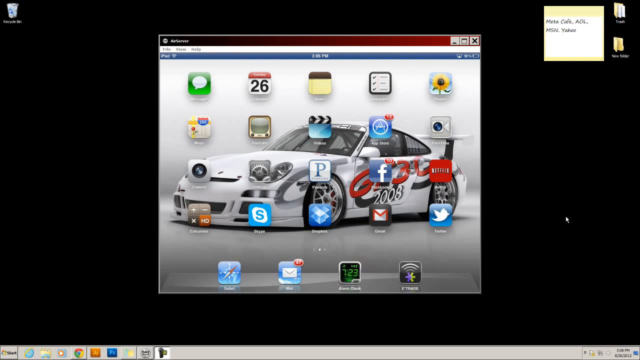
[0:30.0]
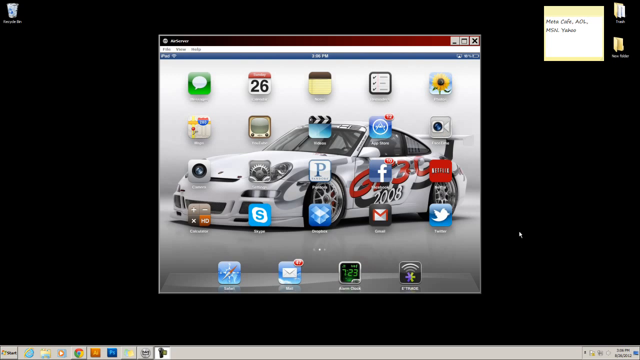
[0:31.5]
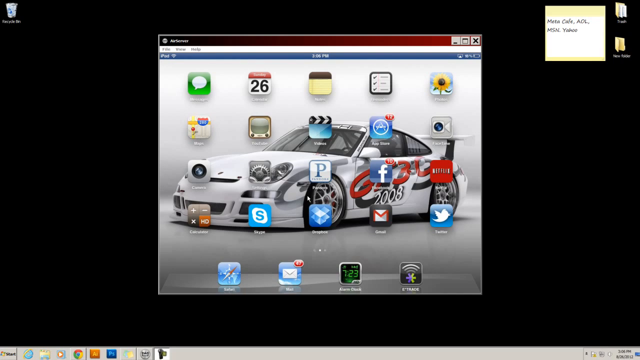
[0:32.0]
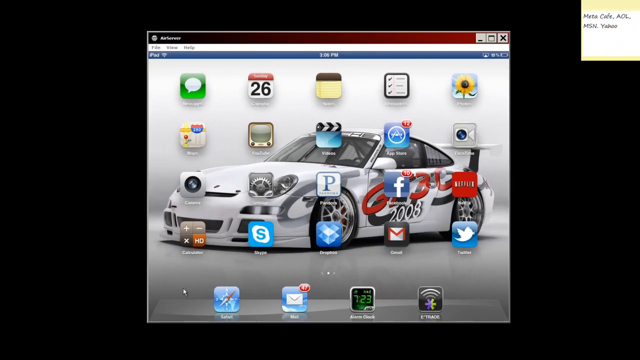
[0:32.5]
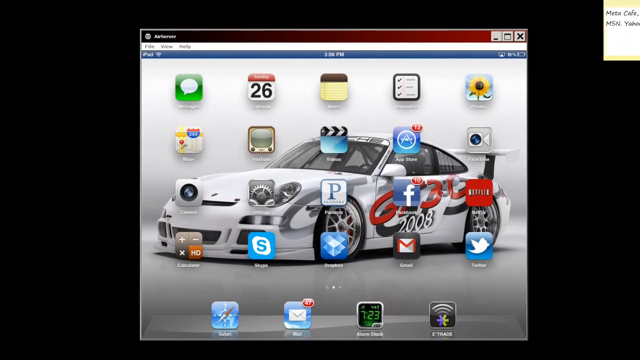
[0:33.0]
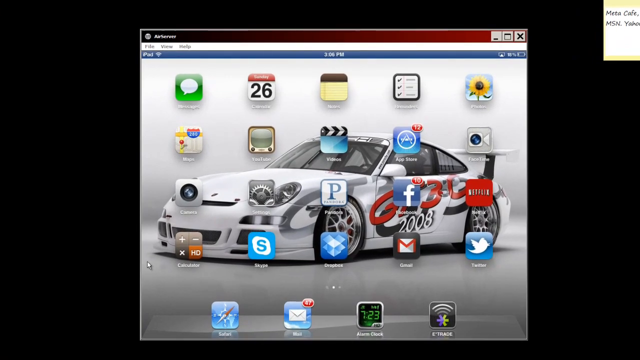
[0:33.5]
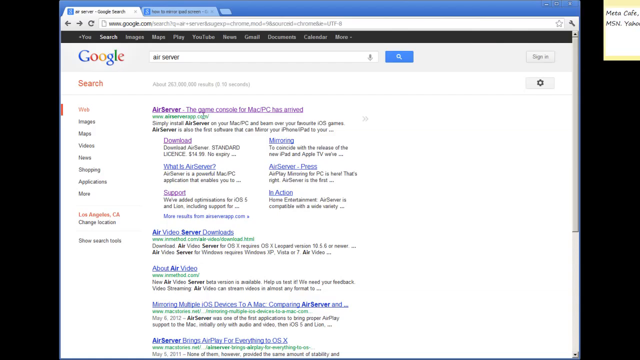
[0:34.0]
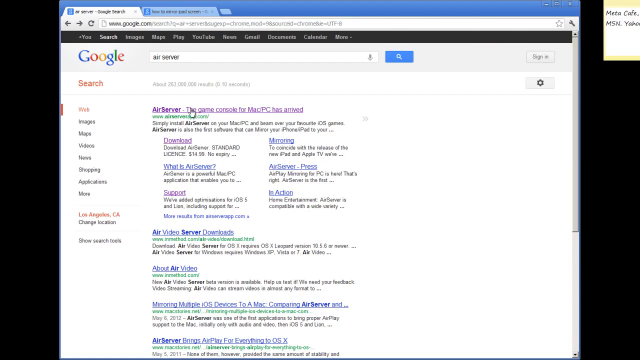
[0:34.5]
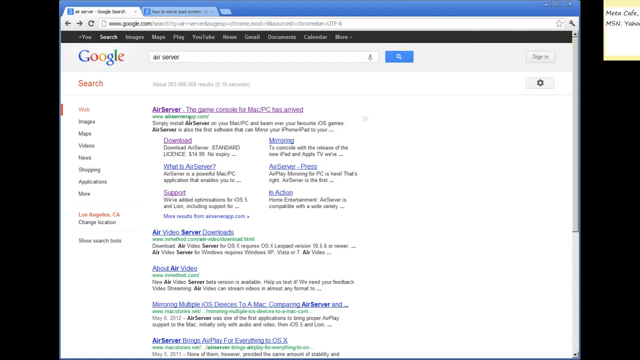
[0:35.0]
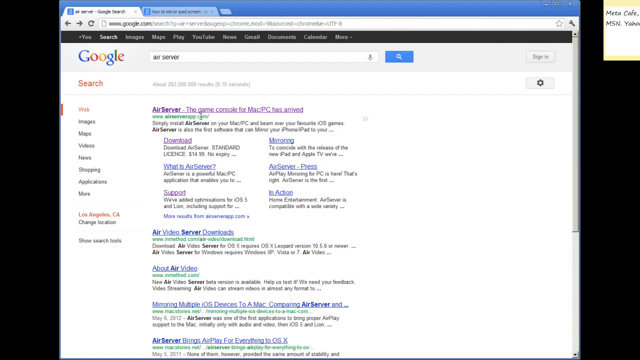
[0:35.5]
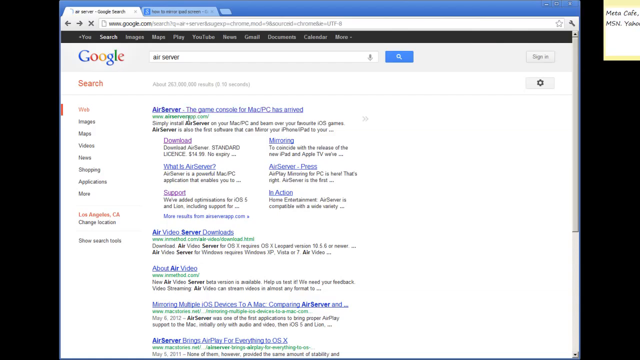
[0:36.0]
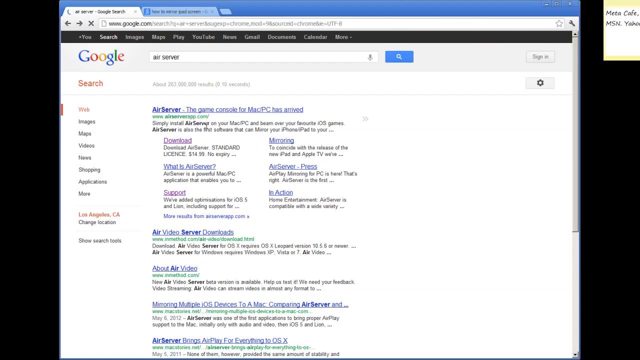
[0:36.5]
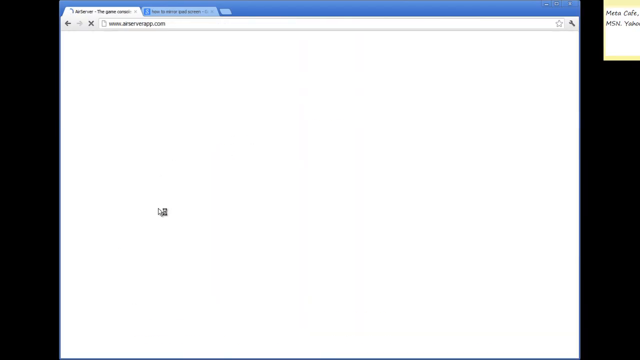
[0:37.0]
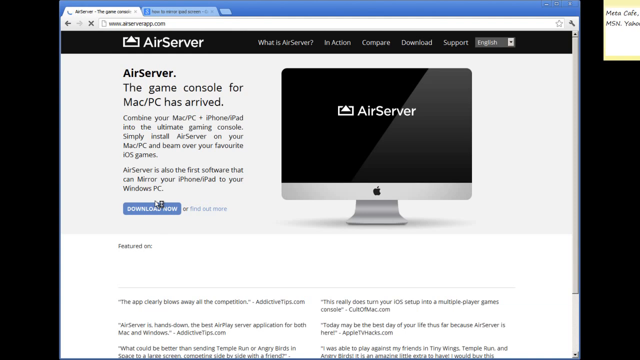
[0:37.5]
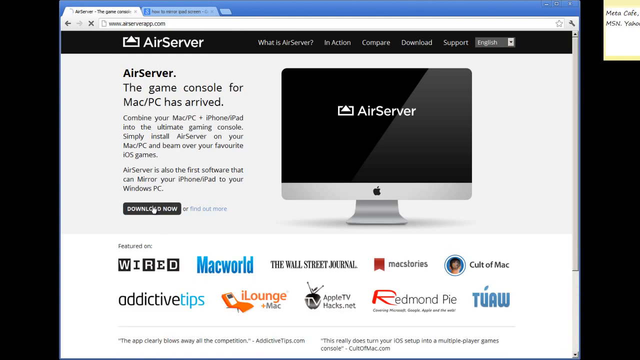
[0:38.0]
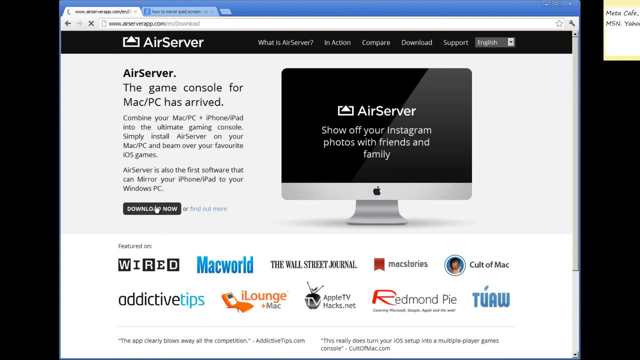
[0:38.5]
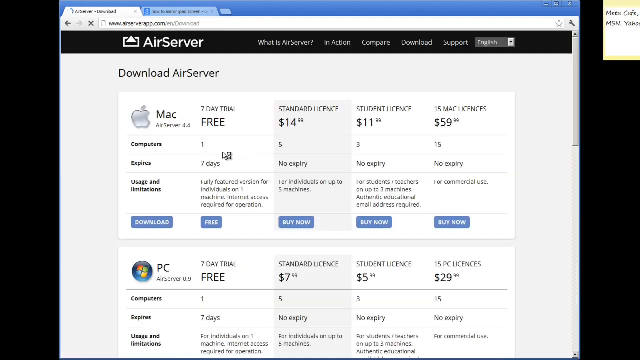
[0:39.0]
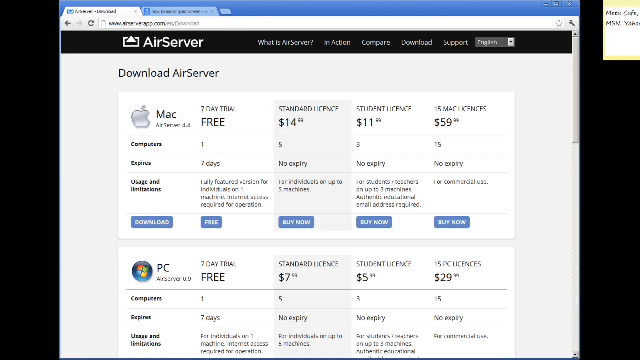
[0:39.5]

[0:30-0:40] The black desktop background shows the silver box in the middle of the screen, which appears to be an iPad screen, with all the apps on it and a white car, which looks like a racing super car, in the background. A post-it note is in the top right-hand corner, a taskbar is along the bottom of the screen and a recycle bin is in the top left corner. The user moves the mouse and the view zooms in on the middle of the screen, then transitions to a Google browser with "air server" in the search bar. The user clicks the first result, and a clean white website page loads with a Mac computer on the right-hand side and a black banner across the top with white text reading "air server". Black text on the white background below reads "air server the game console for mac/pc has arrived combine your mac/pc and iphone/ipad into the ultimate gaming console simply install air server on your mac/pc". The user clicks, and the page transitions to a purchase option screen.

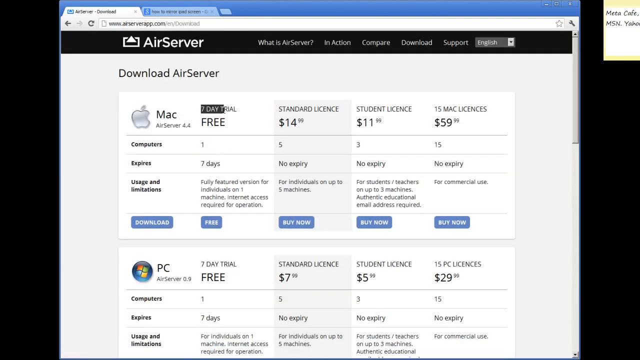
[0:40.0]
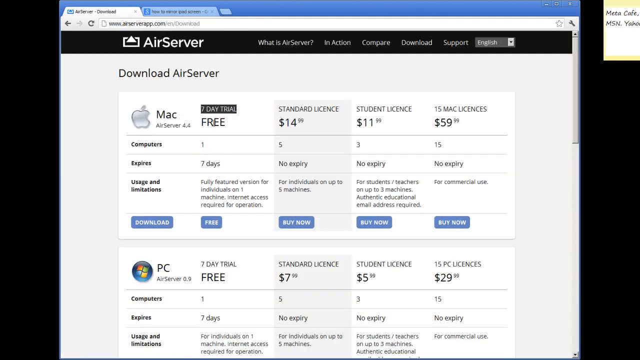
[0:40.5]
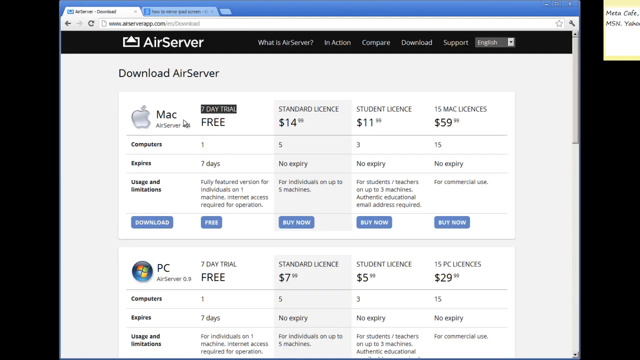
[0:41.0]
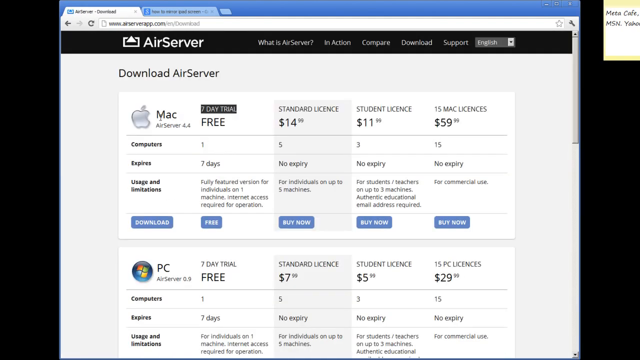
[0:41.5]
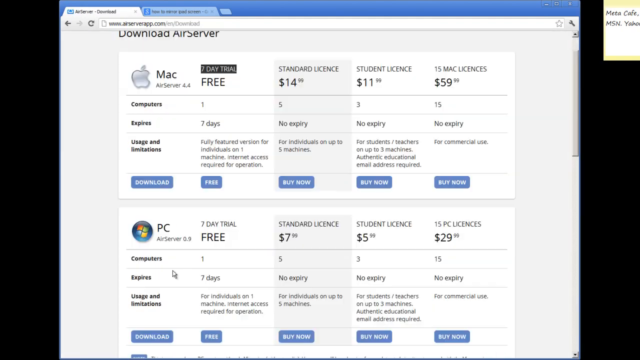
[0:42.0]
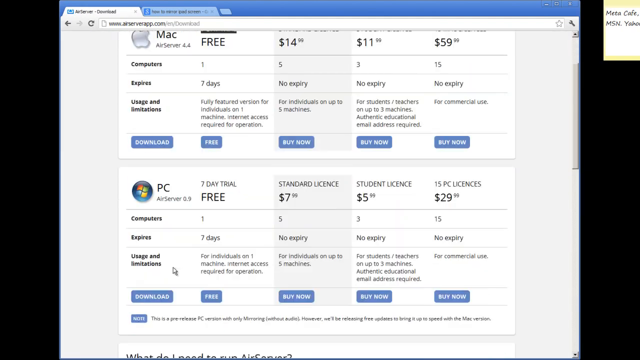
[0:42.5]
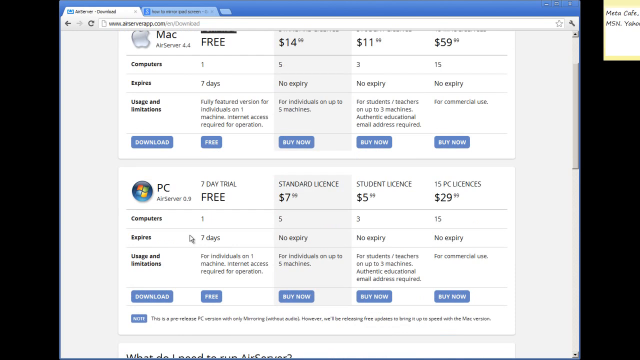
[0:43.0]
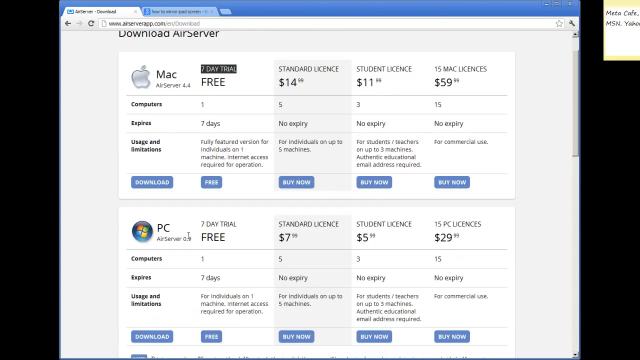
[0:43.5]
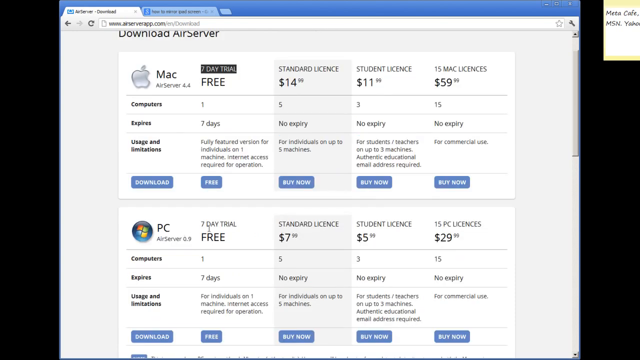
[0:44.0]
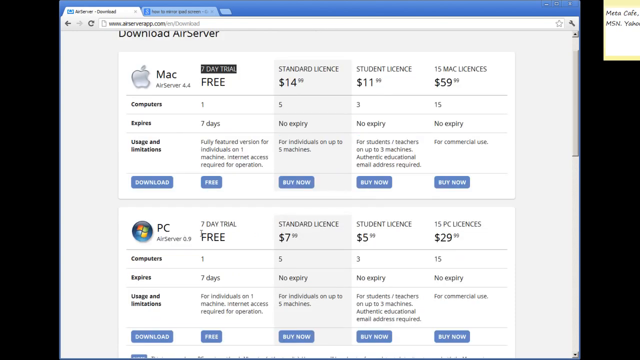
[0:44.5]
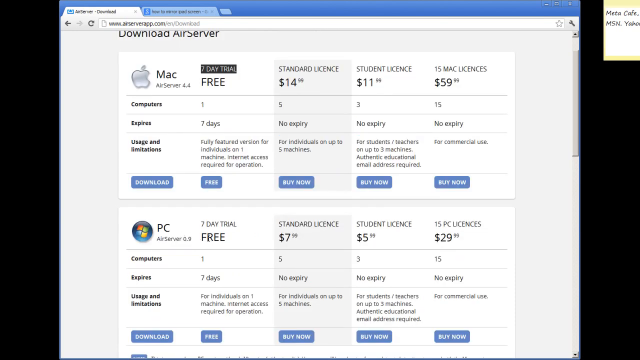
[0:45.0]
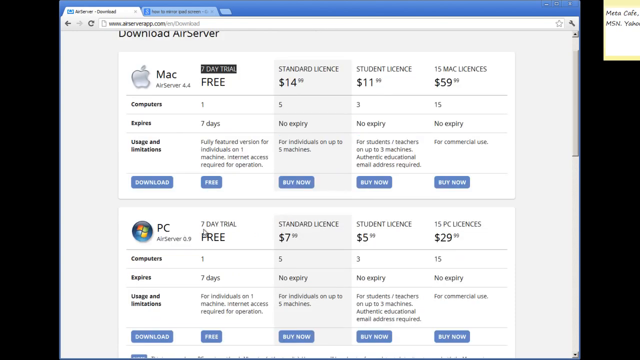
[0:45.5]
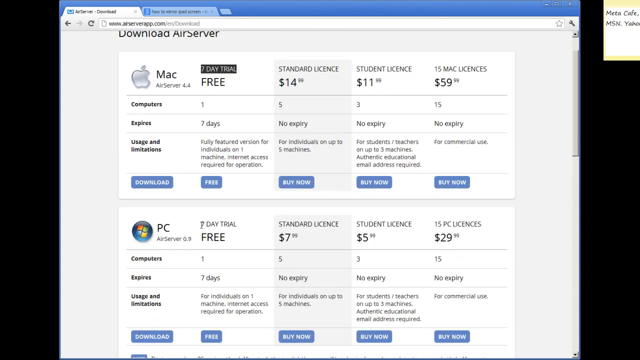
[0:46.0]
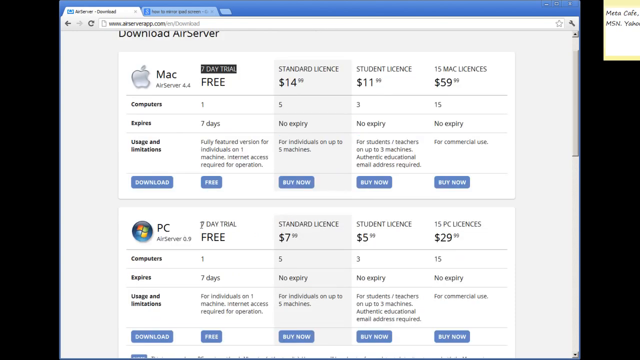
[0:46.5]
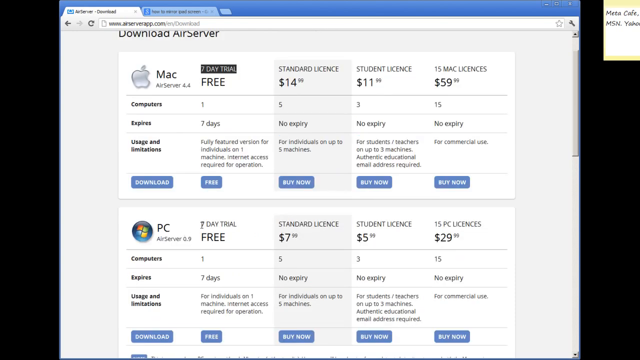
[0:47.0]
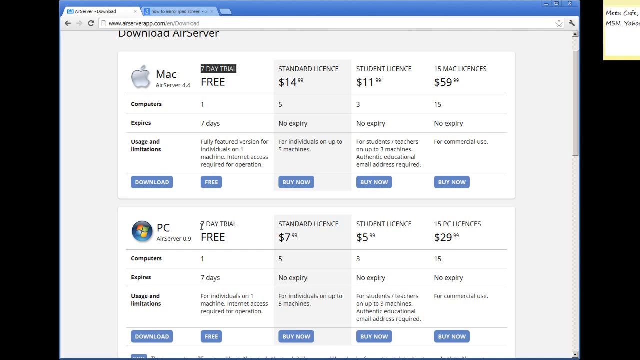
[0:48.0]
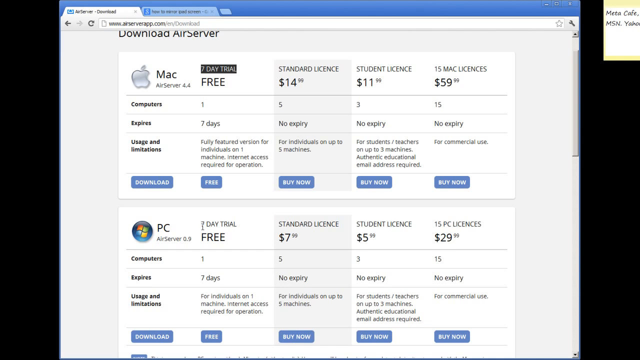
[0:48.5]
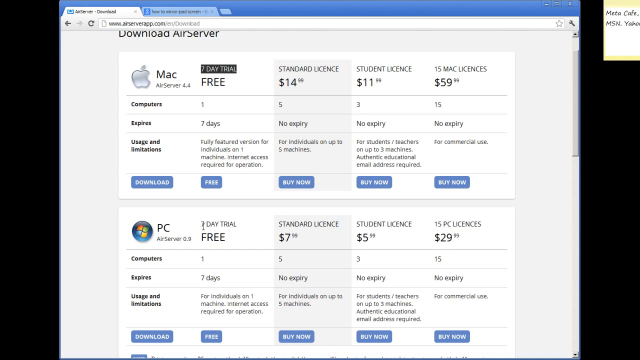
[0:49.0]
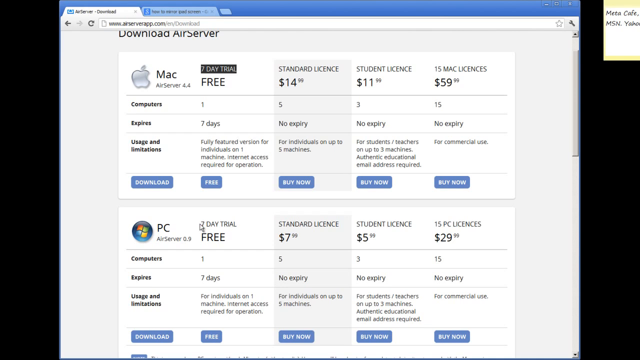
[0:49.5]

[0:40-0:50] An AirServer purchase screen appears, with a black banner across the top containing white text: "AirServer", "What is AirServer?", "In action", "compare", "download" and "support", plus a language toggle set to English. Below, black text on a white background reads "Download AirServer Mac", followed by options for a seven-day free trial, a standard license at $15, a student license at $12, and 15 Mac licenses for commercial use at $60. Further down are similar options for the PC at much lower prices. The user highlights the 7-day free trial text and a black box appears around it, then scrolls down over the PC section and hovers the mouse over the 7-day trial option for PC.